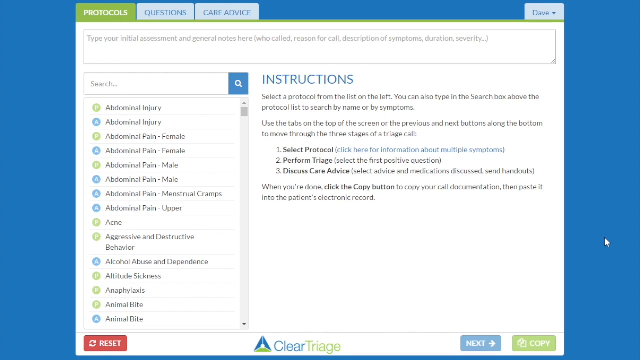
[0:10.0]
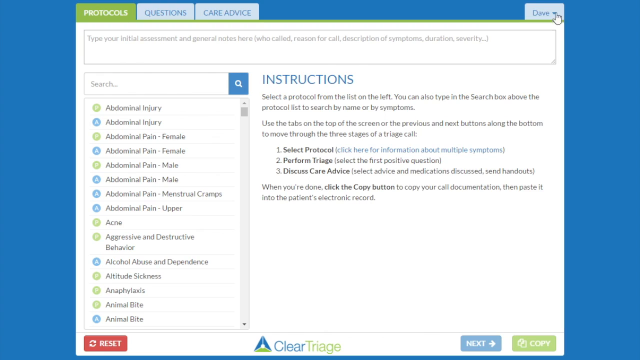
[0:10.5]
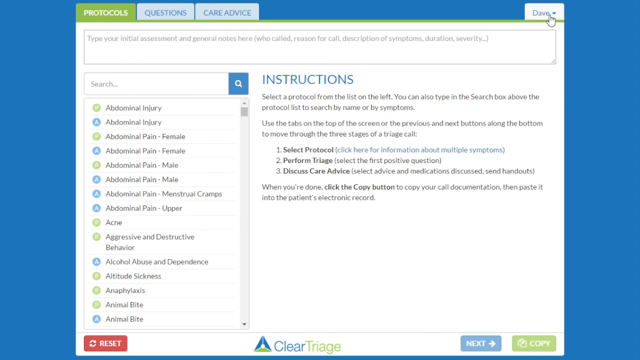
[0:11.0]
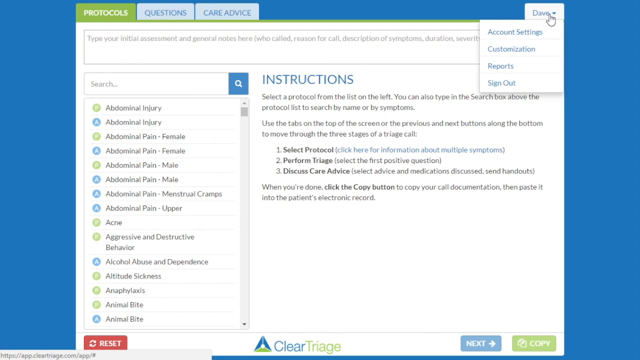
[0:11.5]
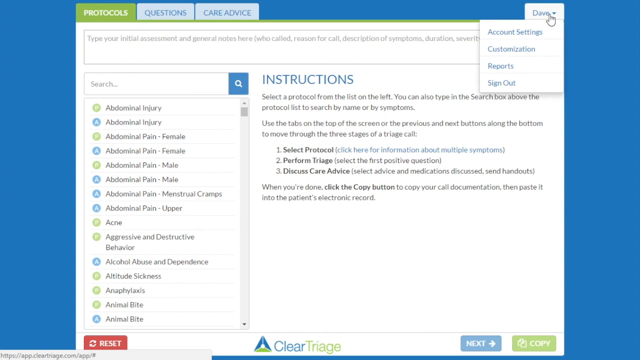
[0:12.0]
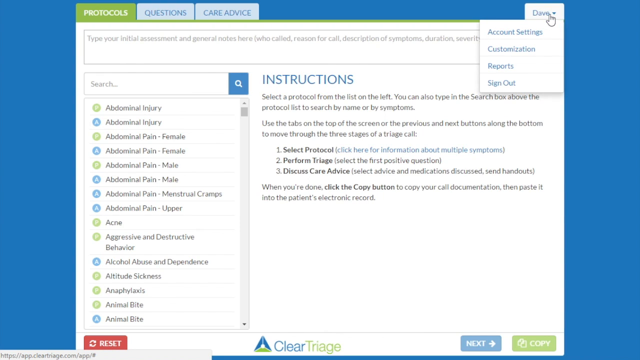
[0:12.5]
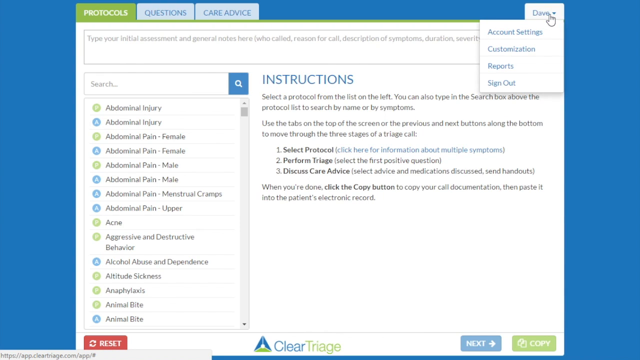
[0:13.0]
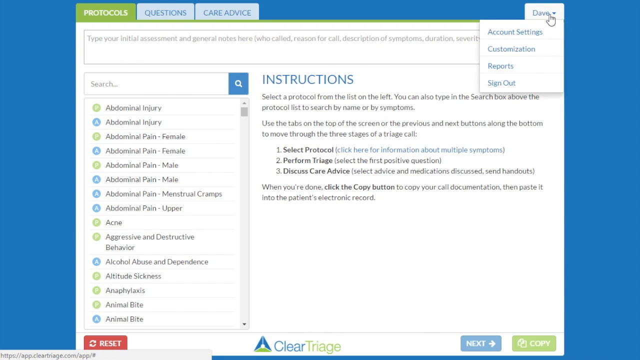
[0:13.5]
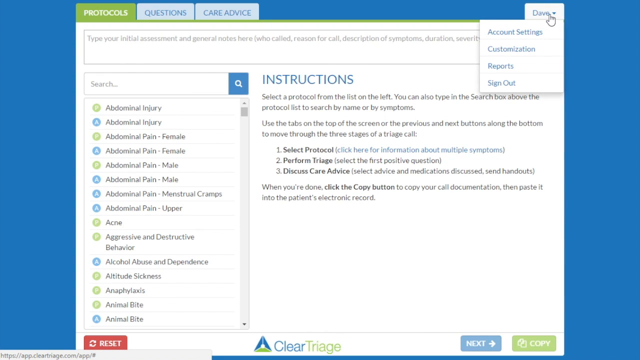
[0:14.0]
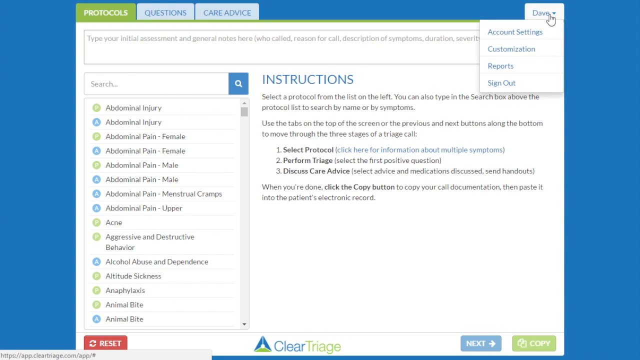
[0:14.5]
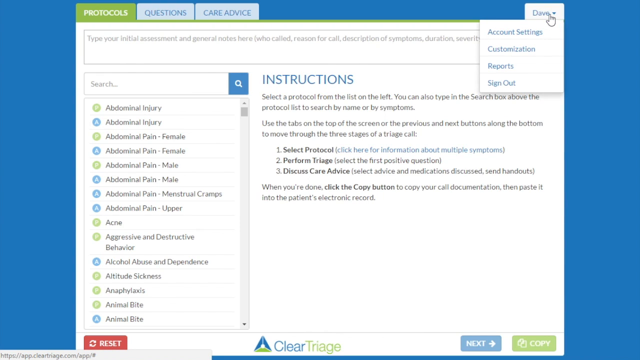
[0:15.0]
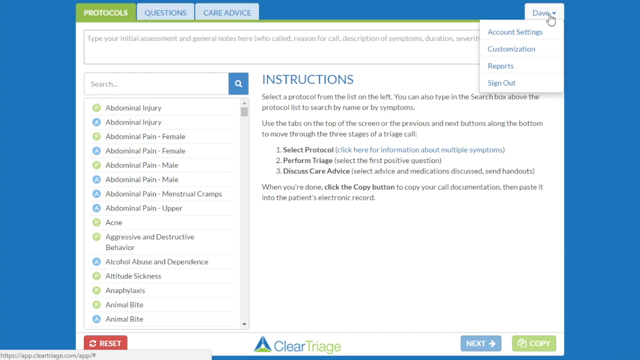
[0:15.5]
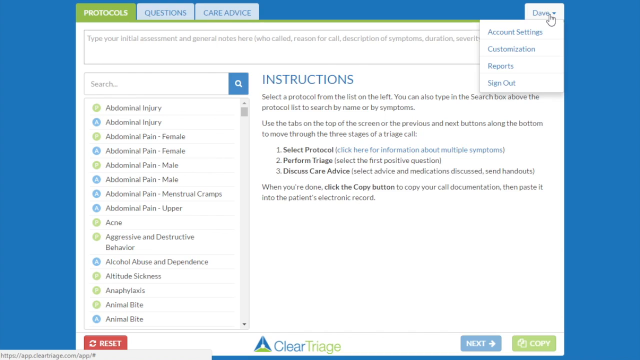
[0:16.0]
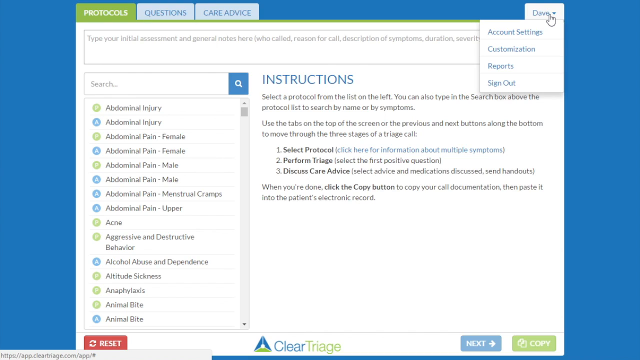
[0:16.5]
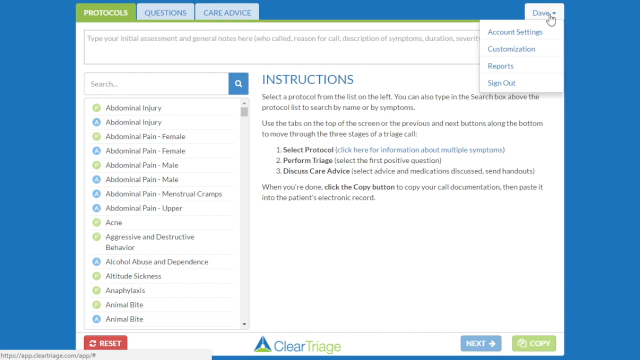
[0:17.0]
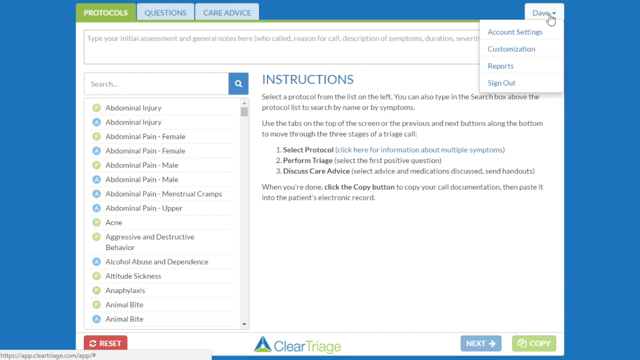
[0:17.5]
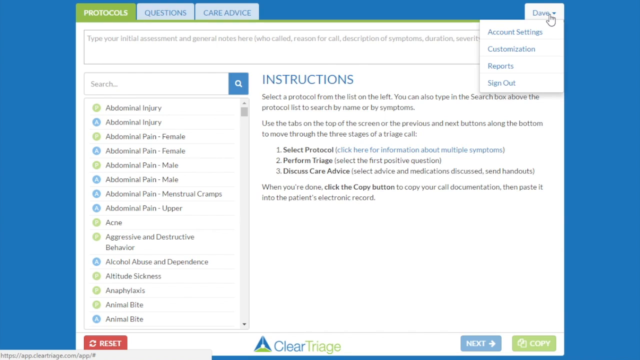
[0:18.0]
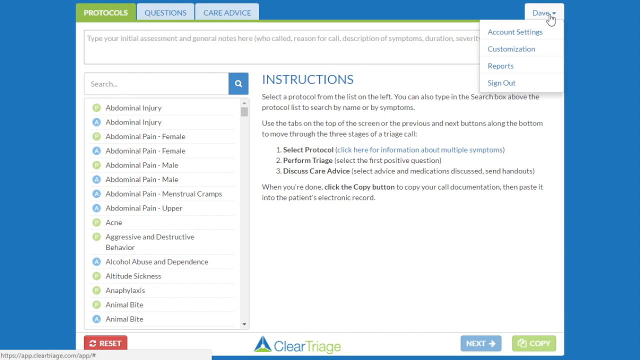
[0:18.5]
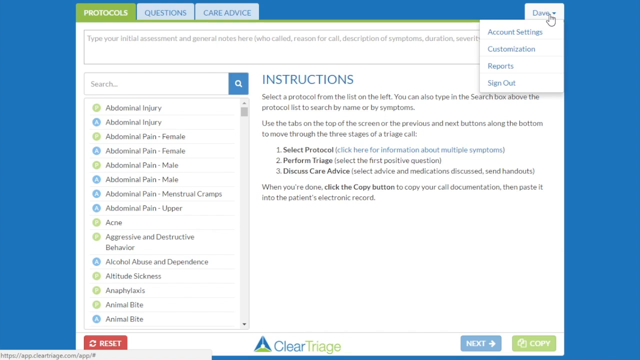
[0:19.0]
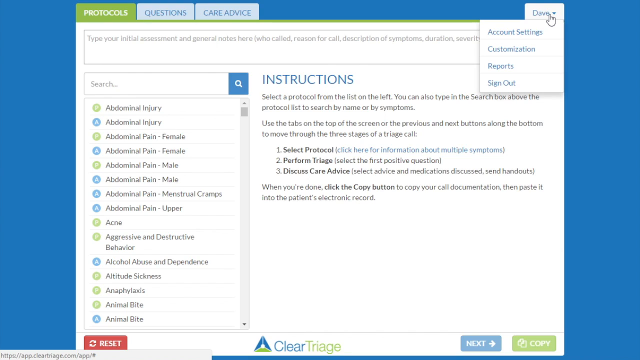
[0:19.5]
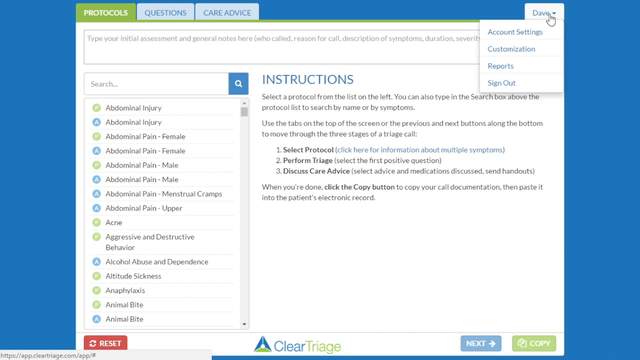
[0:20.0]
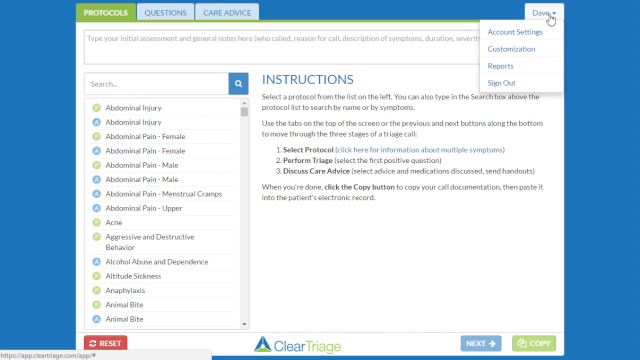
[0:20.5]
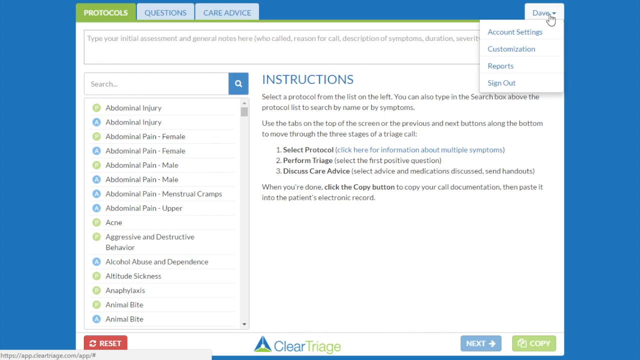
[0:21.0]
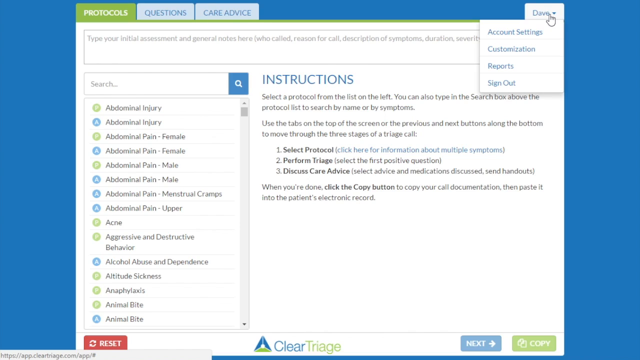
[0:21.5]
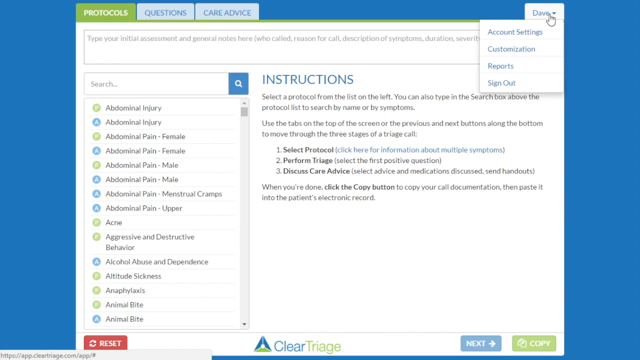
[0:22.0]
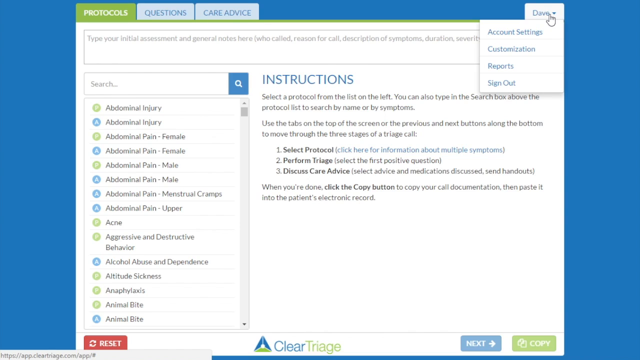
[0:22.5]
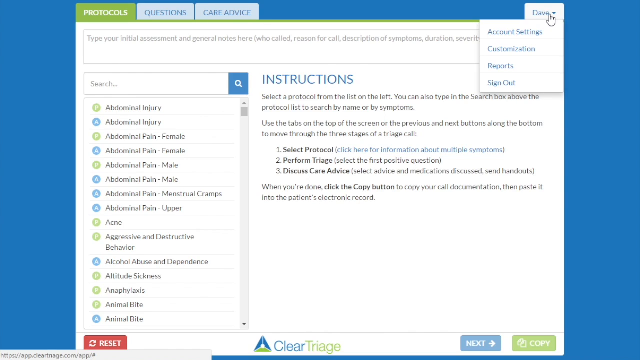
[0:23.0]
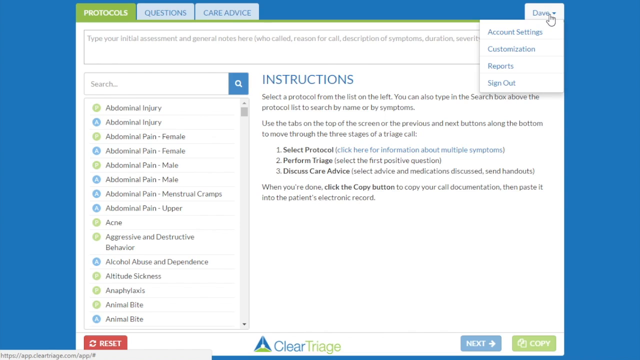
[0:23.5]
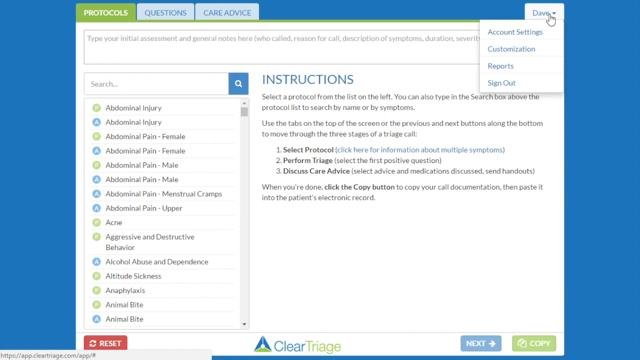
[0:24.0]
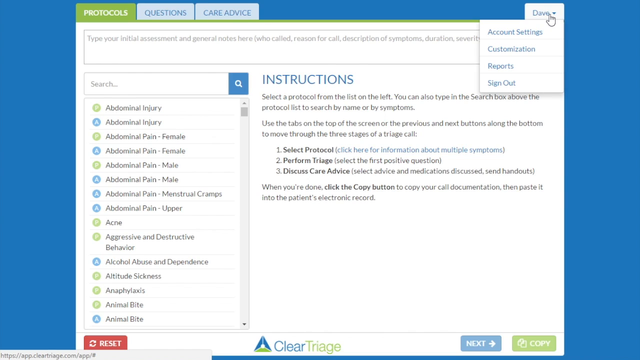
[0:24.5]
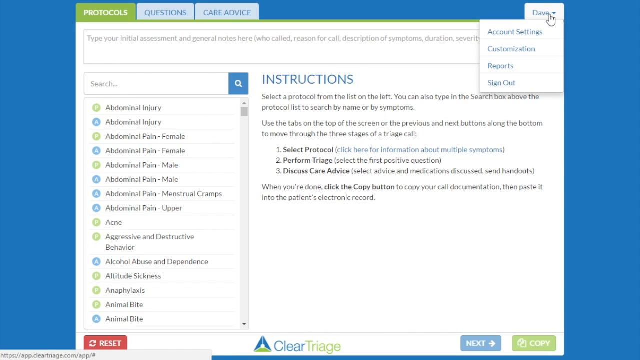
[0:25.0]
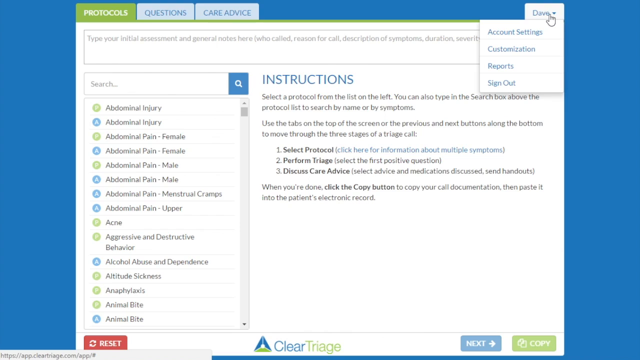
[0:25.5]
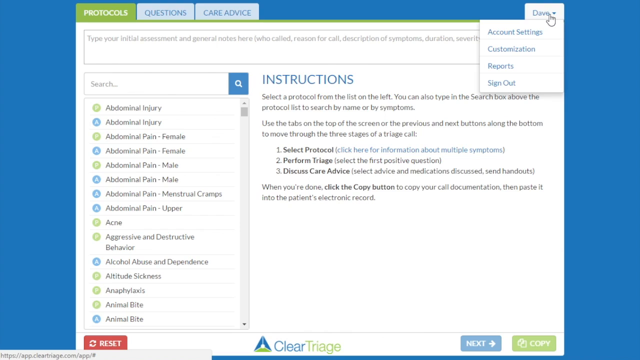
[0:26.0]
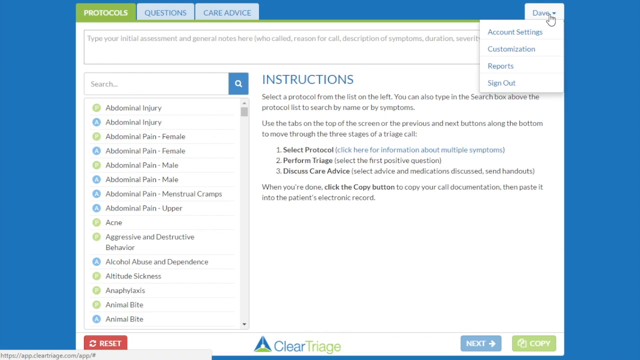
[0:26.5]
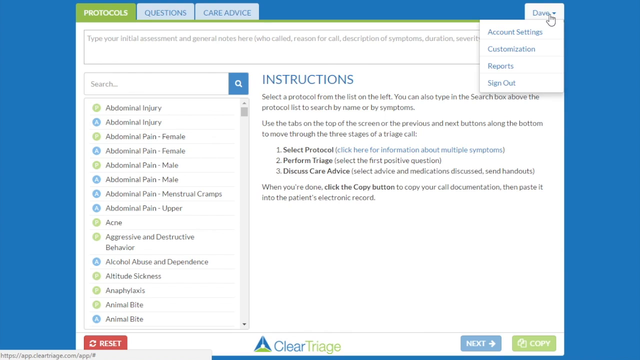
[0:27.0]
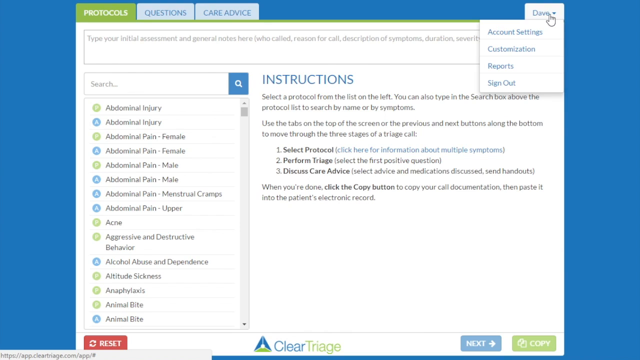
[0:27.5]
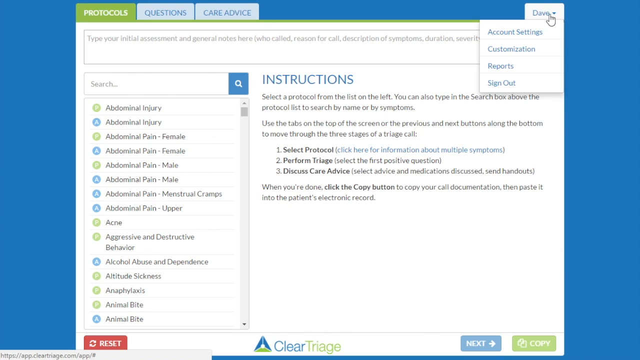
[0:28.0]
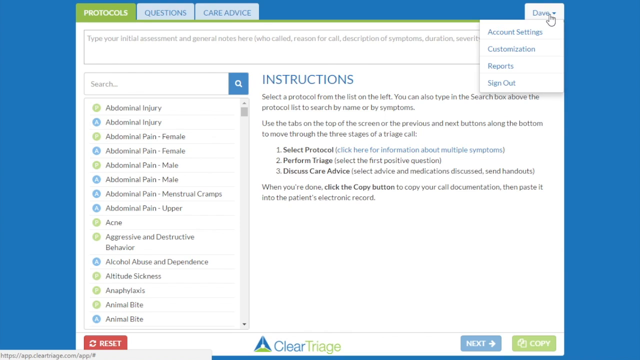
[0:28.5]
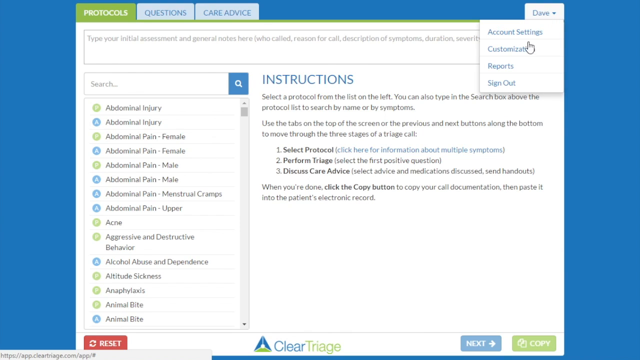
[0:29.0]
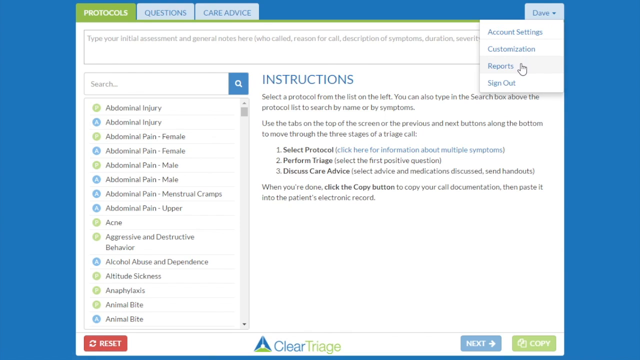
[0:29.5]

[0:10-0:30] The instructions page for care protocols remains on screen. On the left-hand side is a list of protocols for treating specific conditions, beginning with abdominal injury, running through various types of abdominal pain, and continuing to animal bites. A scroll-down option allows the alphabetical list to continue. The instructions ask the user to select the protocol, perform the triage and then discuss care advice, using the tabs at the top of the screen and the previous or next buttons, then when done to click the copy button to copy the core documentation and paste it into the patient's electronic record. The mouse moves to the far-right tab at the top of the page, headed "Dave". A drop-down menu appears with "account settings", "customisation", "reports" and "sign out". The mouse hovers over reports and clicks.